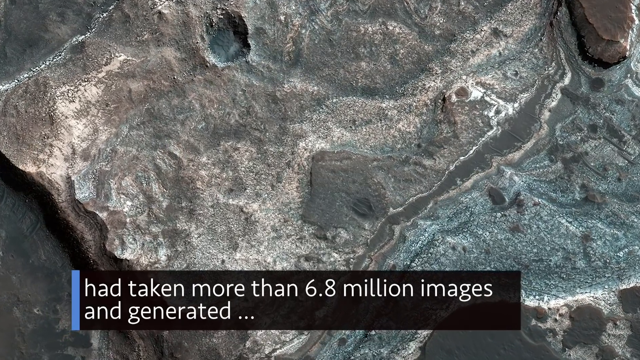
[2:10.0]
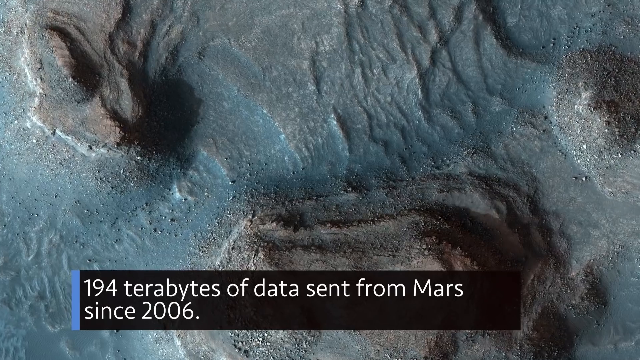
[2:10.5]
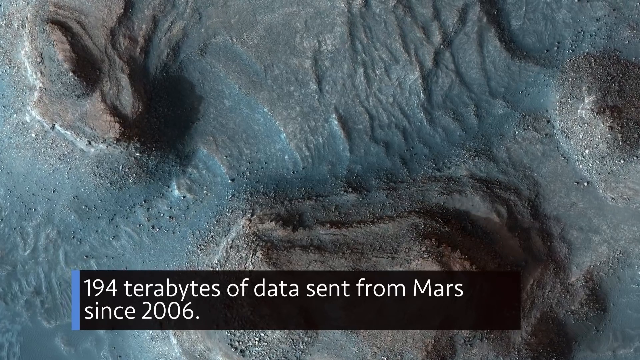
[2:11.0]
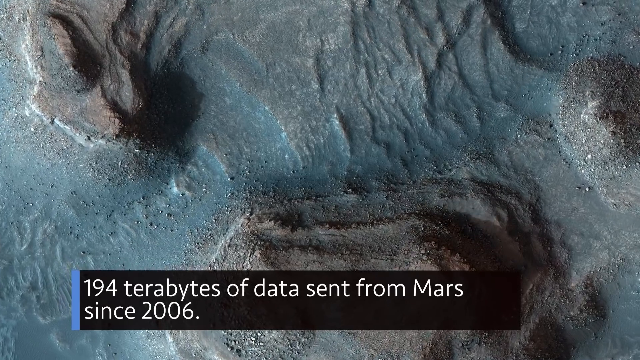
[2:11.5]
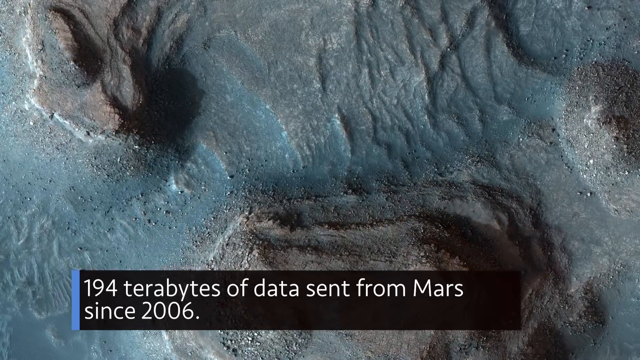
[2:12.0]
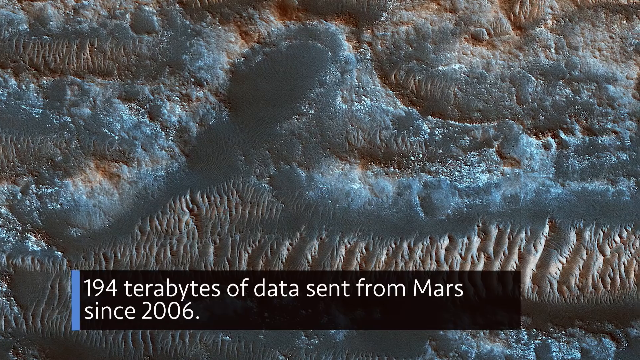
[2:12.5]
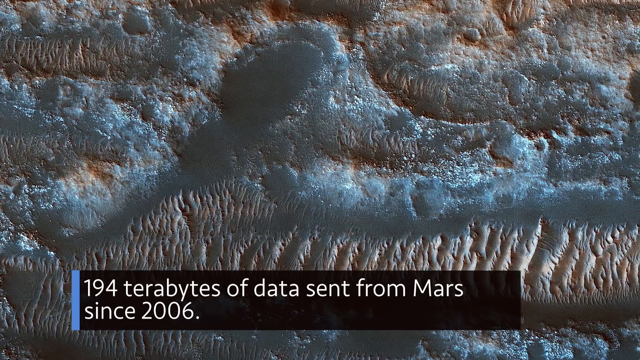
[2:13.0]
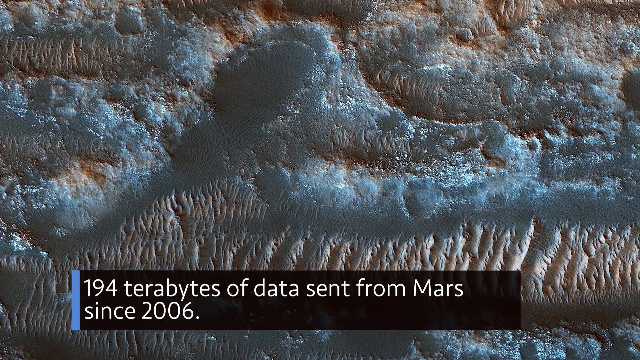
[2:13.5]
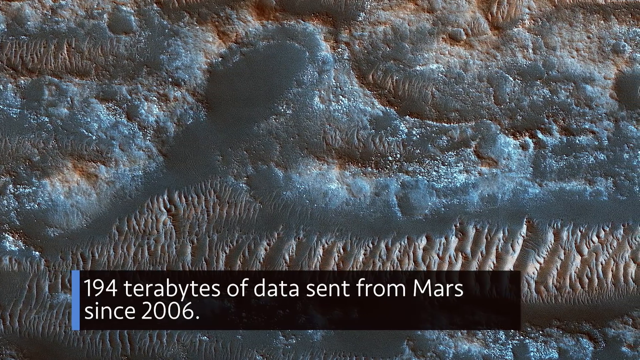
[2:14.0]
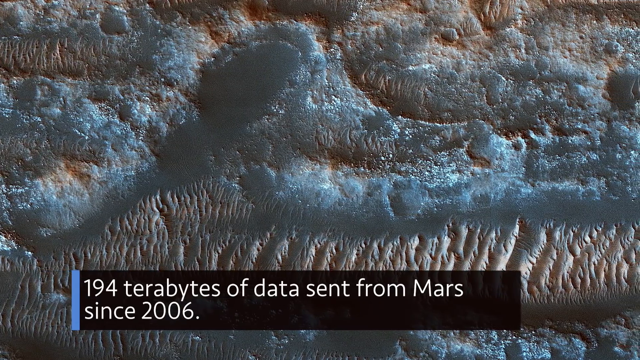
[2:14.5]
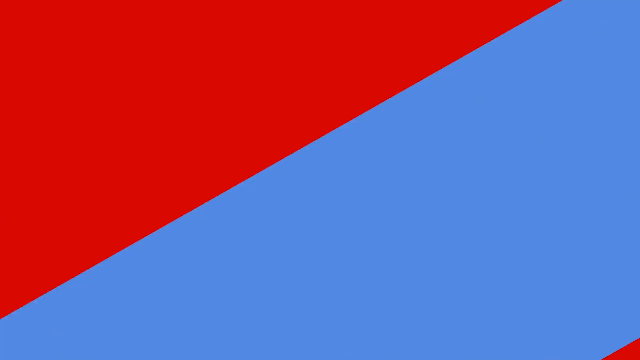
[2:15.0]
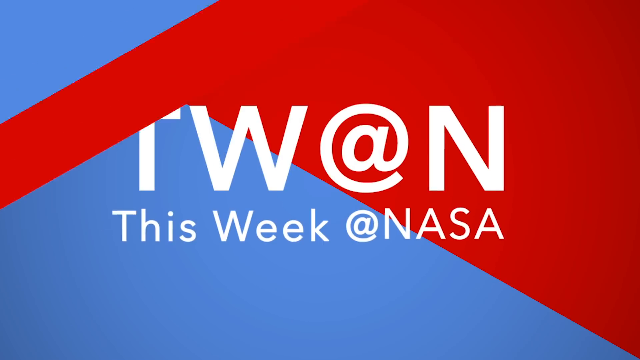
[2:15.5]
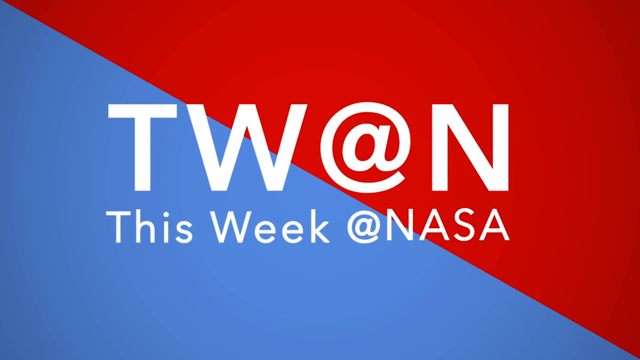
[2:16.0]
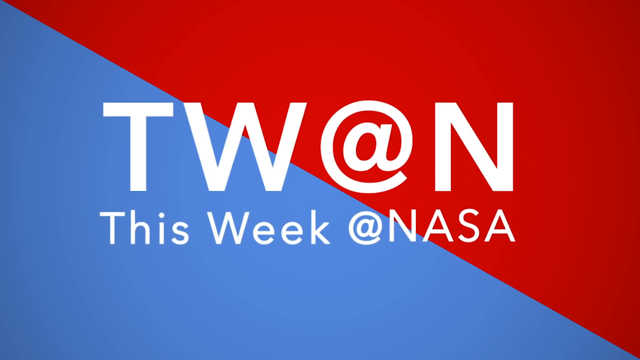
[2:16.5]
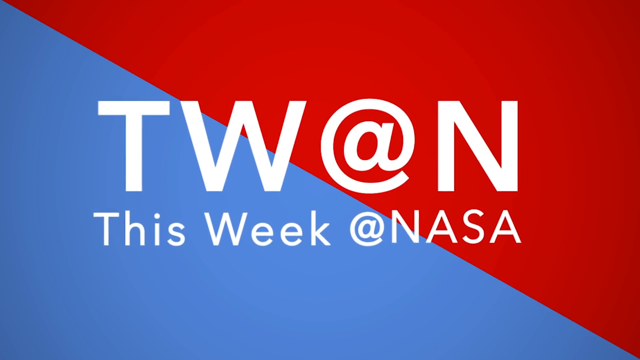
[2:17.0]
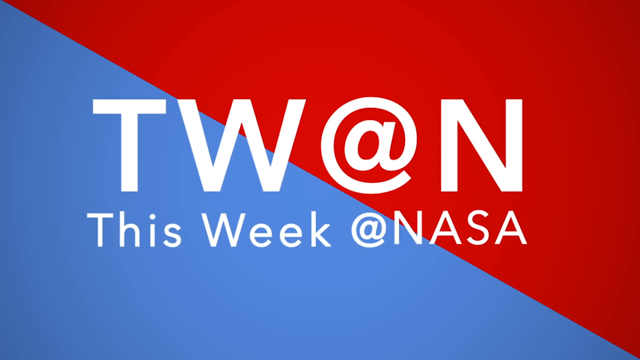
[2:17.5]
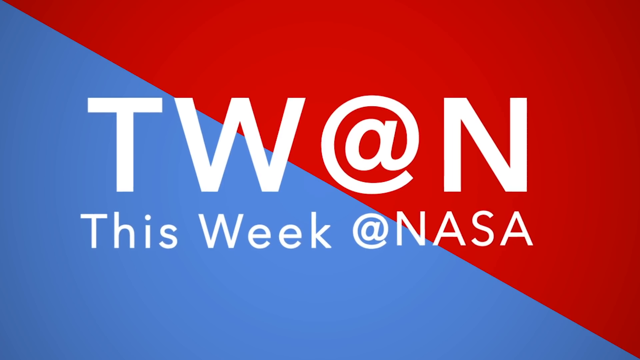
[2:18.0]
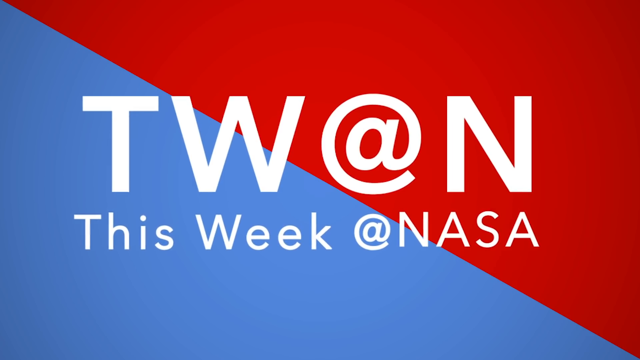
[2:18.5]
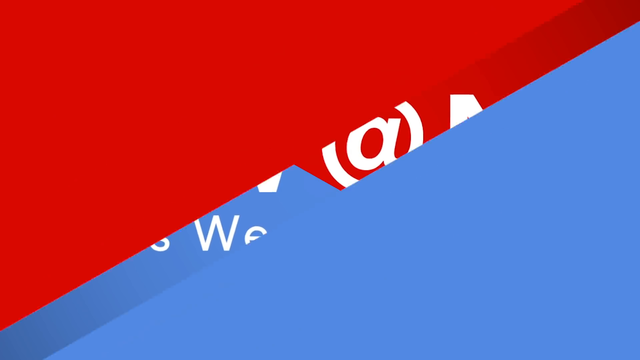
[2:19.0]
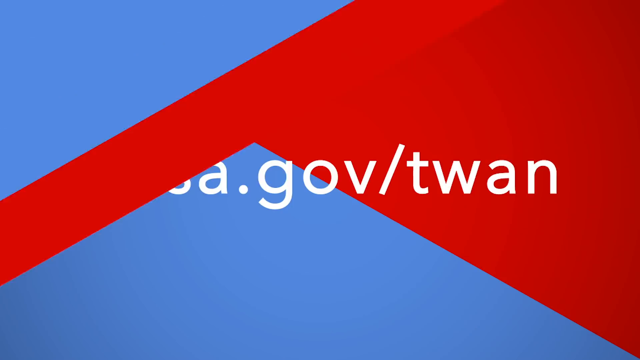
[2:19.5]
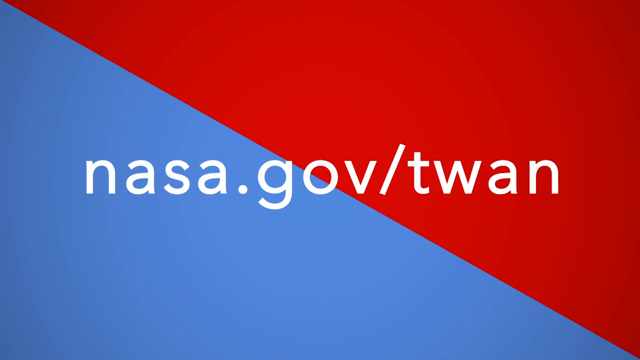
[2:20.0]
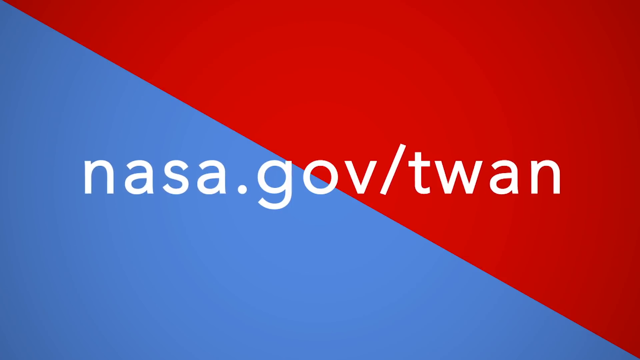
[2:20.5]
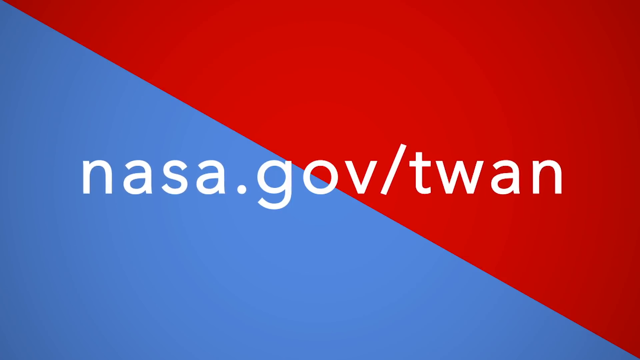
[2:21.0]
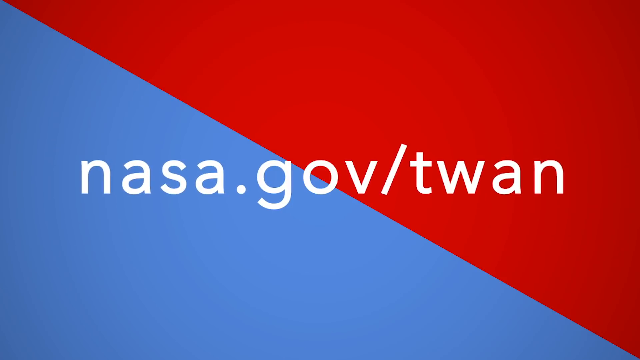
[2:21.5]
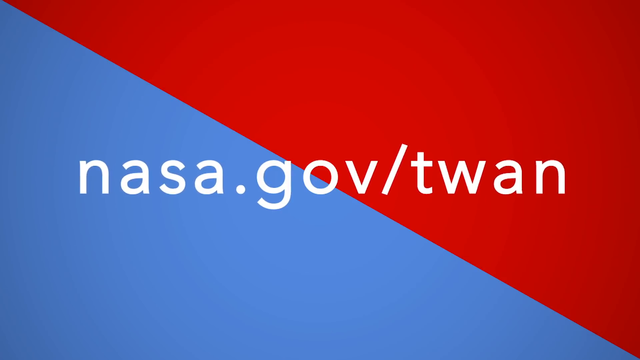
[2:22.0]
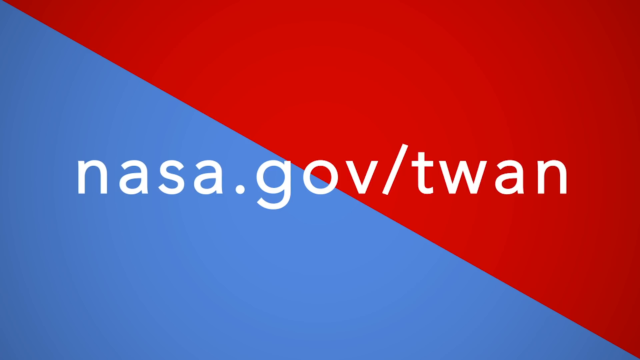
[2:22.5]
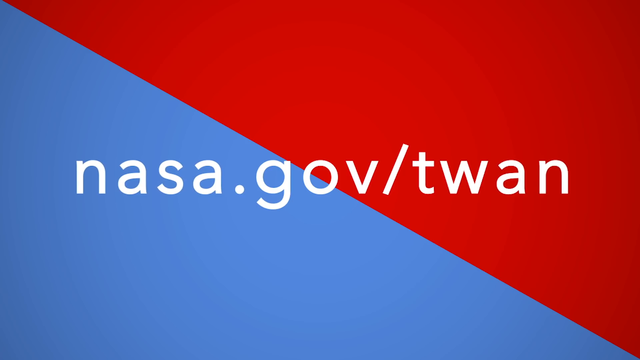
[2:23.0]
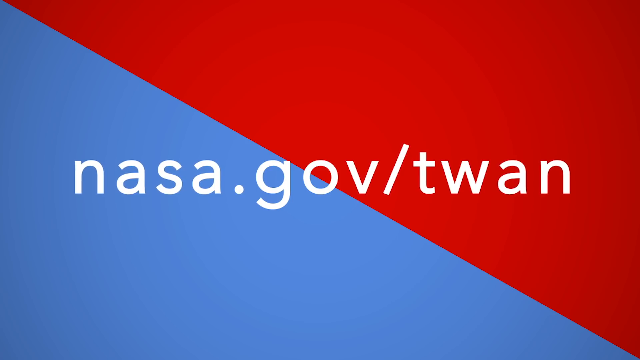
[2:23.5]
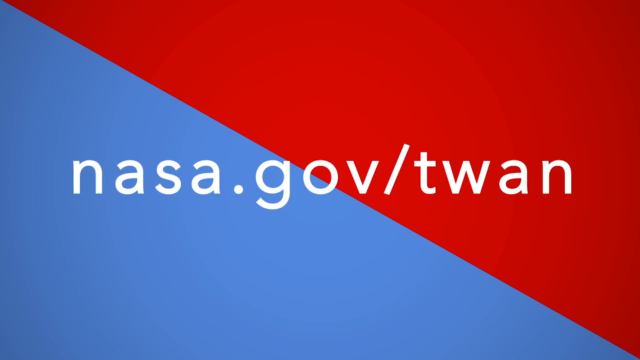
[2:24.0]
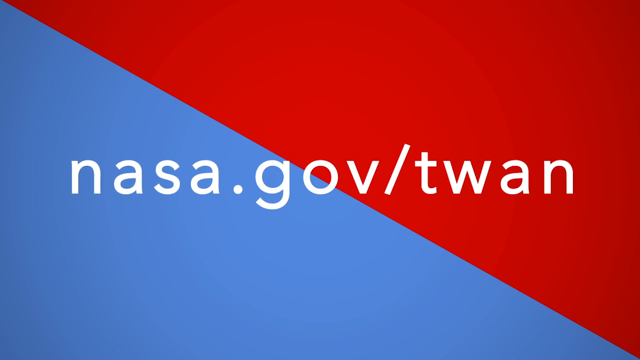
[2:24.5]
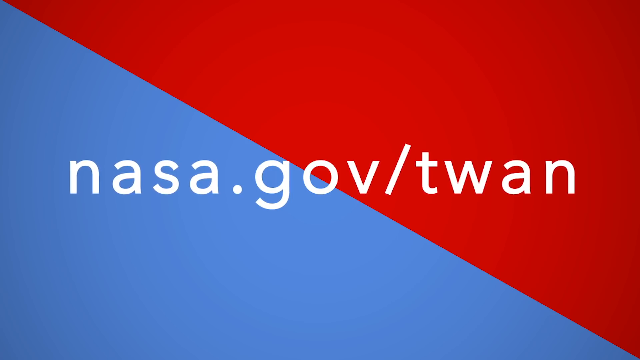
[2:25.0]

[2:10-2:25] Another view of the Martian surface appears to show brown hills with bluish gray ground, and the banner at the bottom reads "194 terabytes of data sent from Mars since 2006." Next is another view of the ground, a bluish red color with white highlighting, which looks like a topography of Mars. A red and blue transition leads to a scene with text that includes "this week" and "NASA" with @ symbols, and the camera zooms into that logo for a bit. It then changes to a slide reading "nasa.gov/TWAN," and the rest of the video is that slide slowly zooming in.